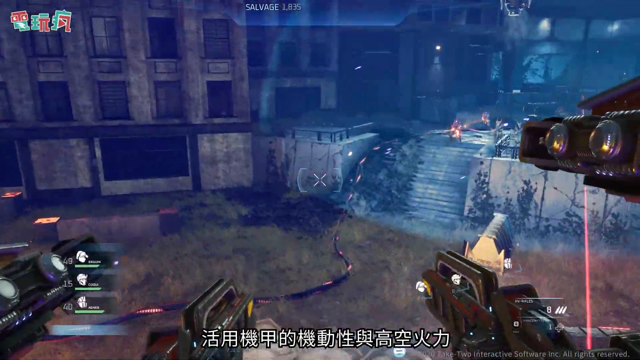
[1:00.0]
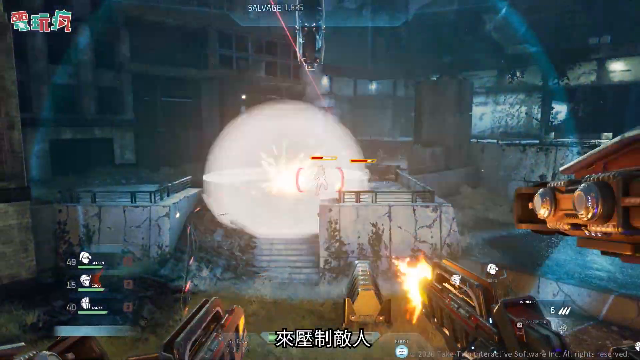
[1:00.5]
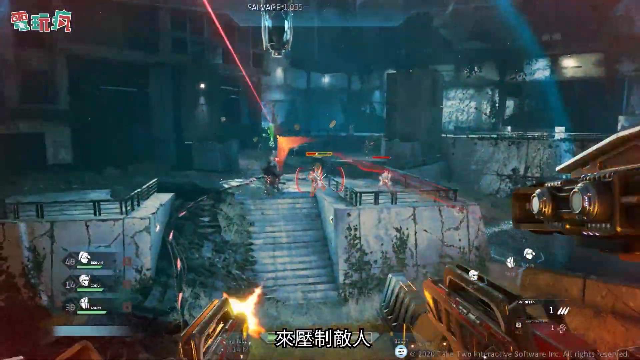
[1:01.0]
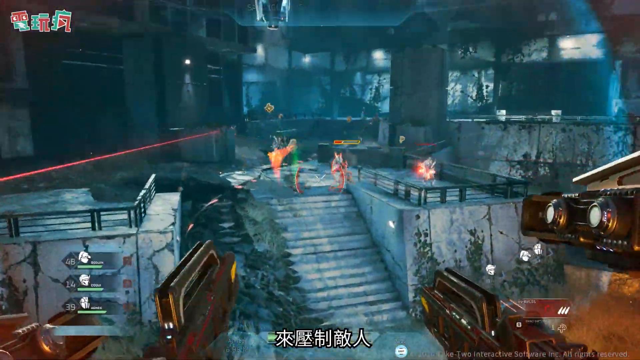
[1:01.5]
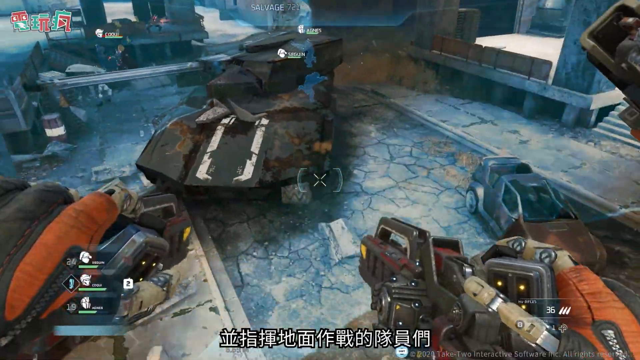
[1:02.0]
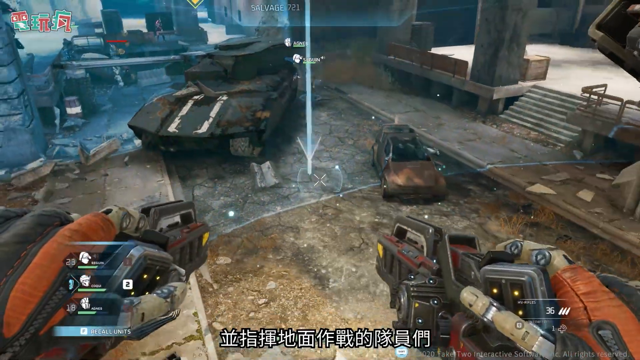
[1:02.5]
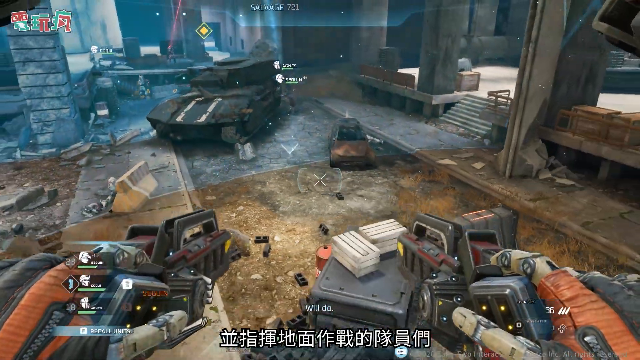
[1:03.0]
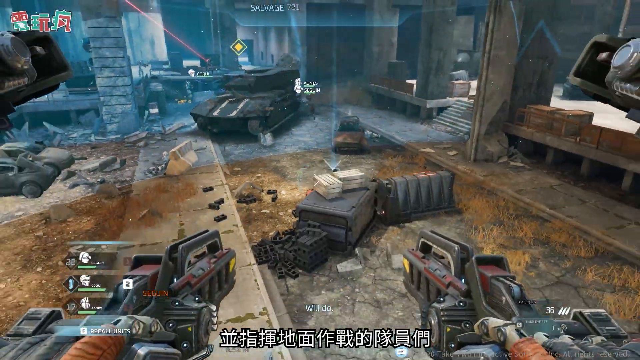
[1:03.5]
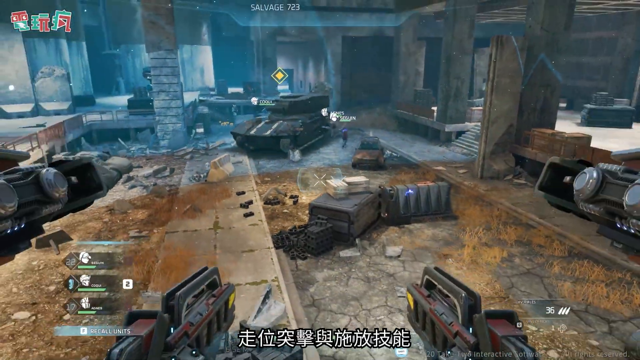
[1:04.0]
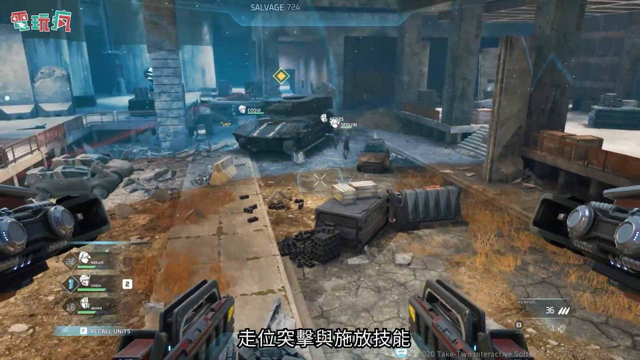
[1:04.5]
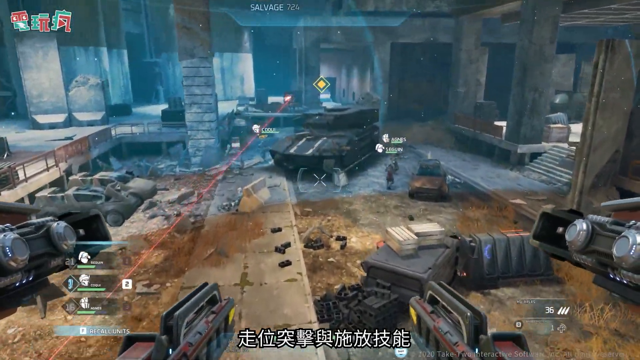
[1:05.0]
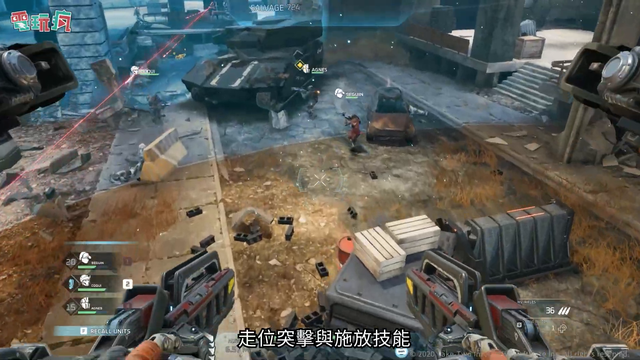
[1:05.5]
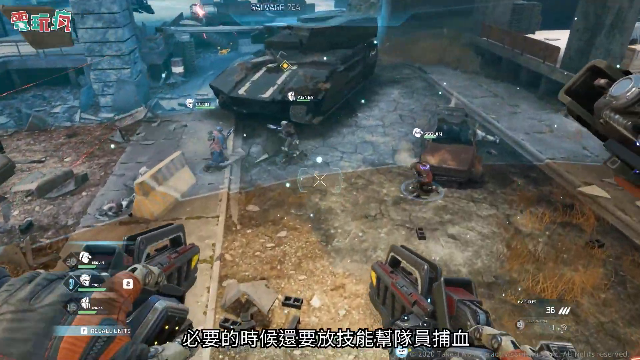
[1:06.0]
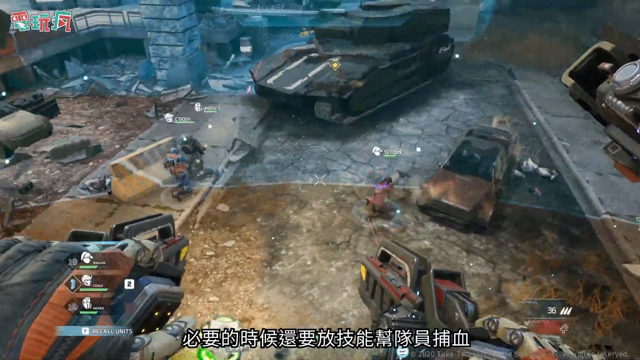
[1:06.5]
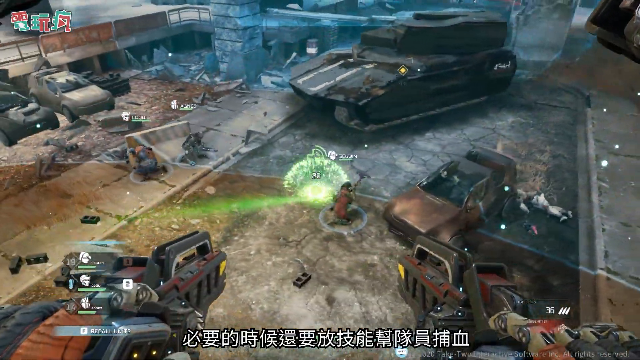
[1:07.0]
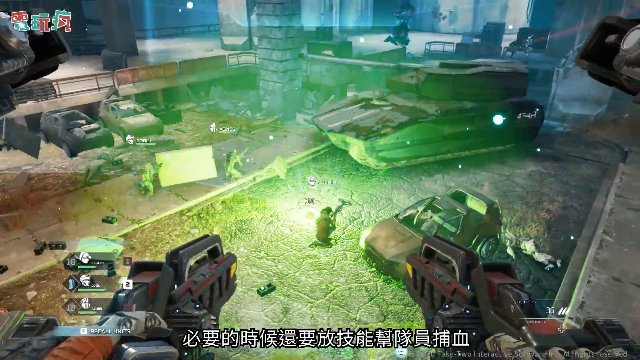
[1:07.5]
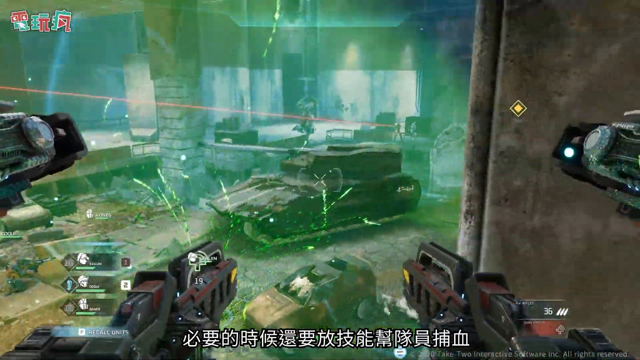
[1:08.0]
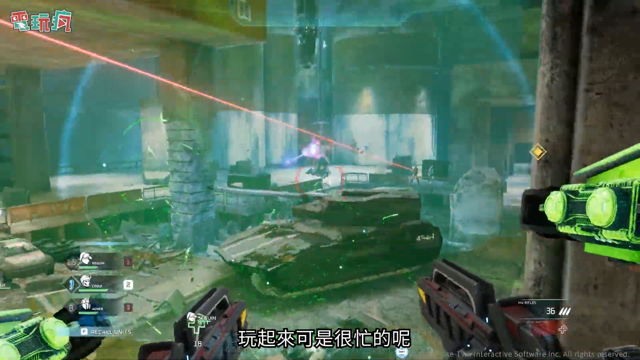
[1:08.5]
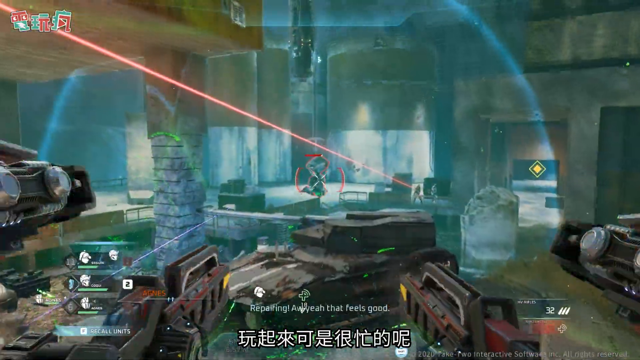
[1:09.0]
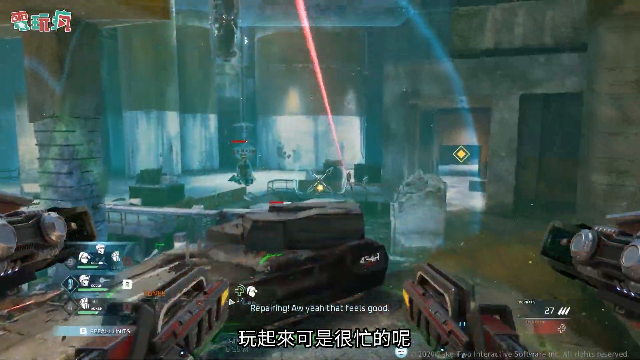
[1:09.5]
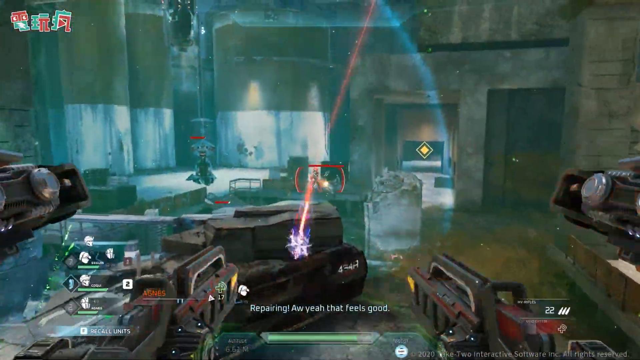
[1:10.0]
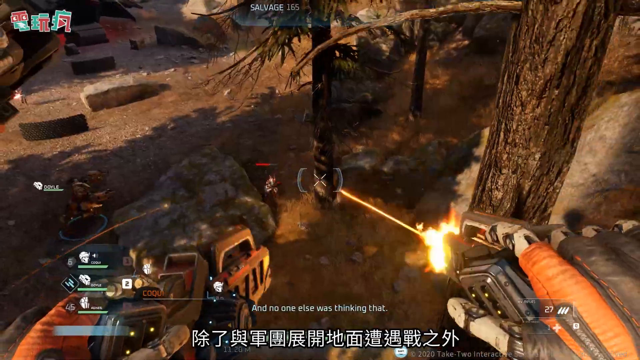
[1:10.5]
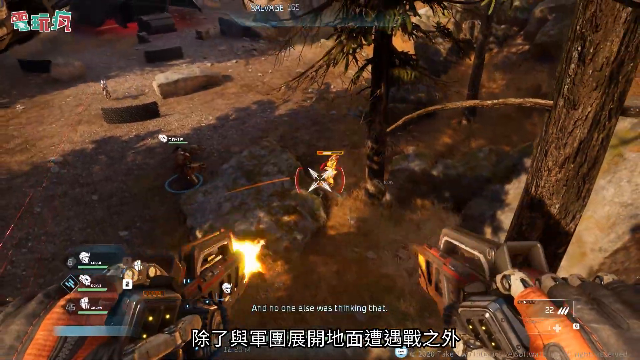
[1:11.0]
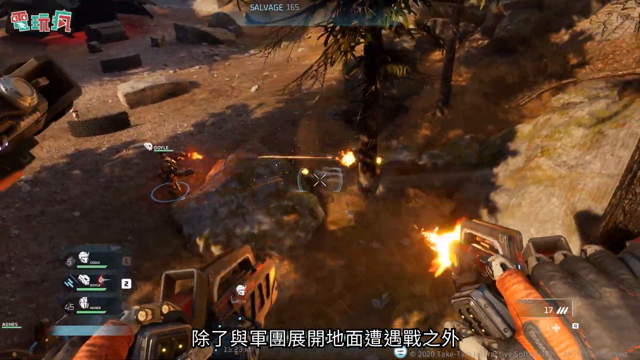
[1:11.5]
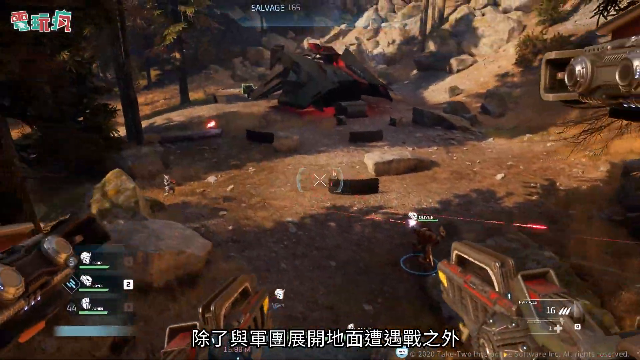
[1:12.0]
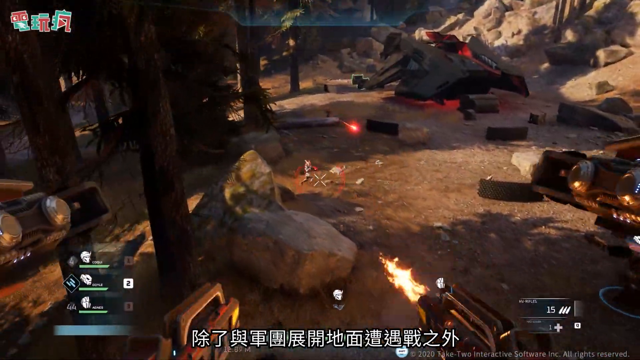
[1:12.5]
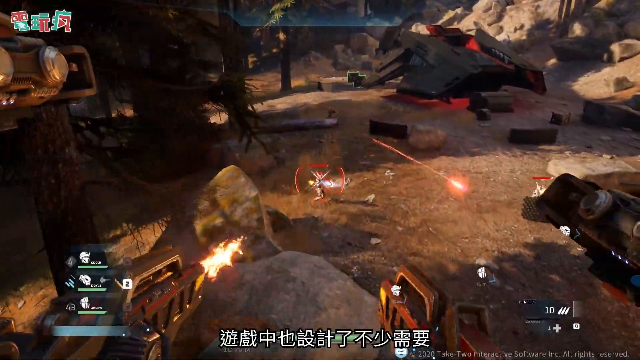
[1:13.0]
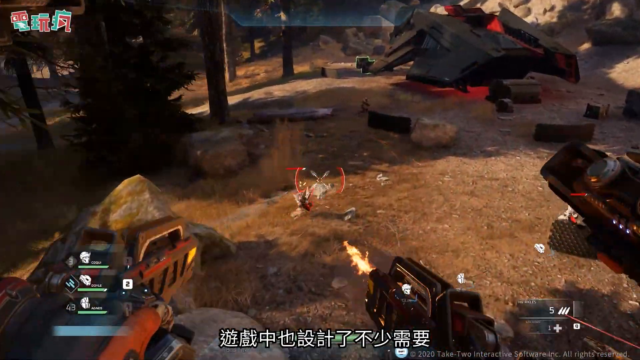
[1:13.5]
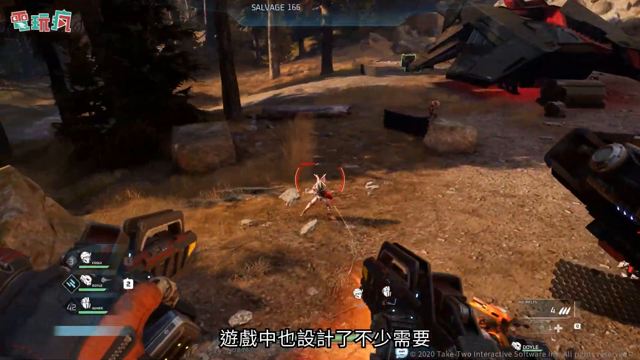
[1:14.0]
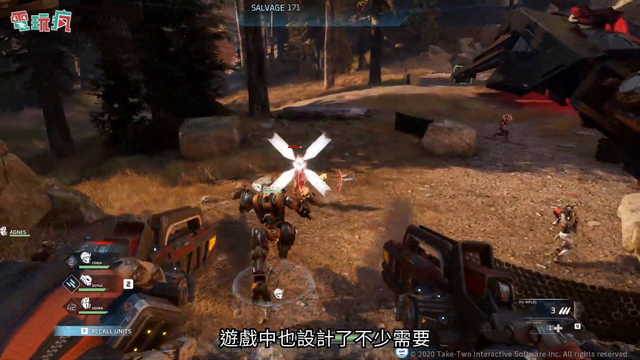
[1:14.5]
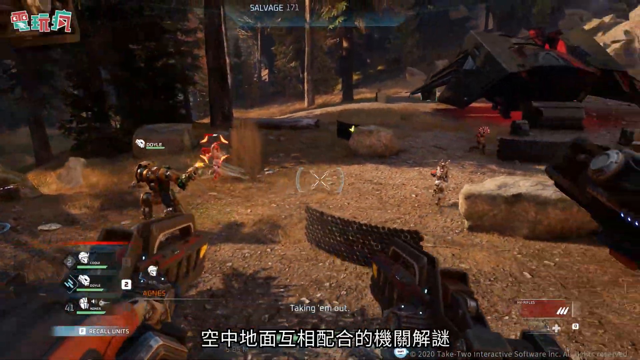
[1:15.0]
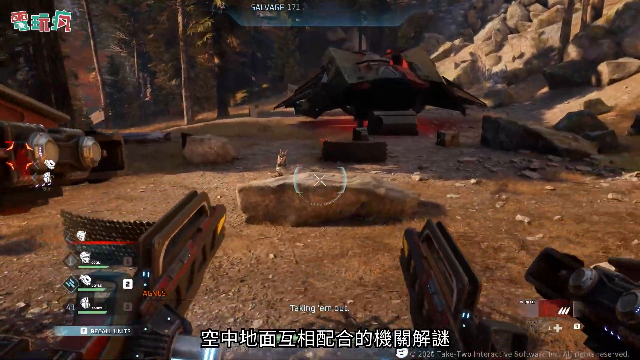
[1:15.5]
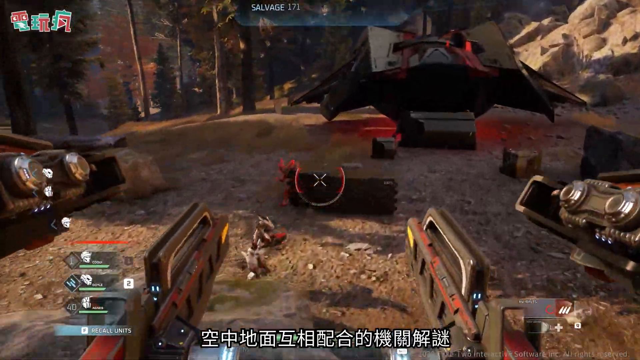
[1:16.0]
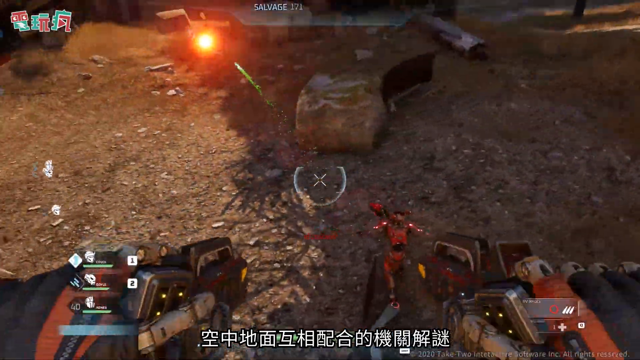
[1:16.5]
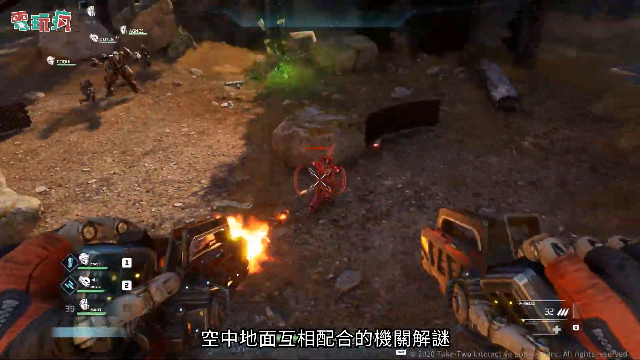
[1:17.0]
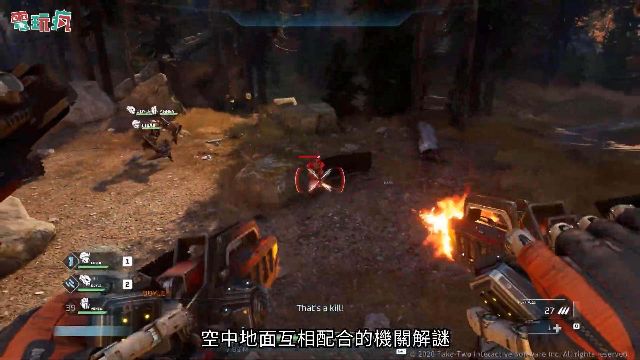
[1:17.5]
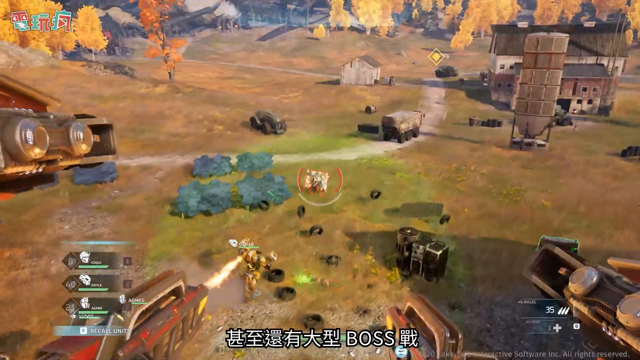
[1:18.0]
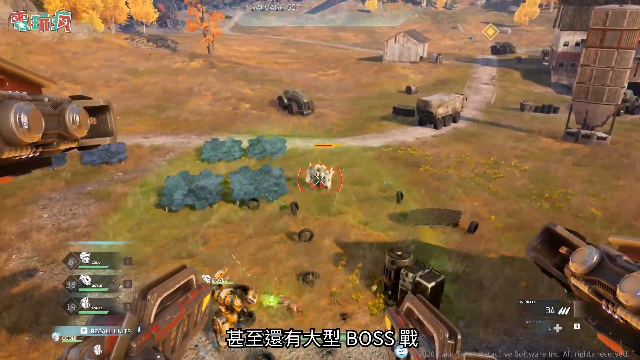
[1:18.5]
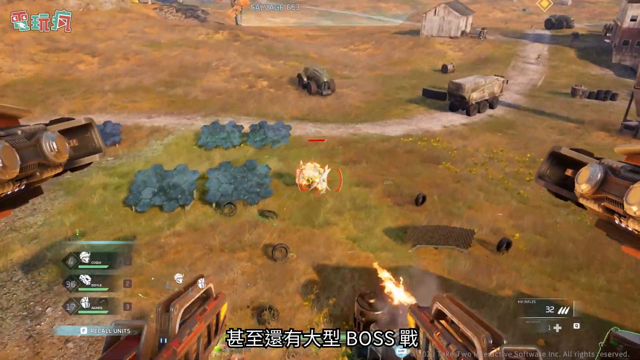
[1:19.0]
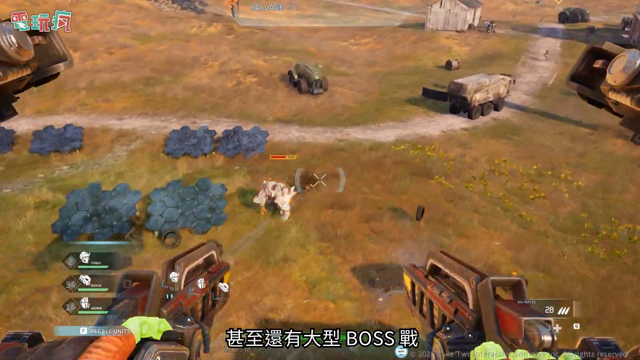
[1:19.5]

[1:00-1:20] Several shots and explosions happen on a small pedestal with some stairs, and then everything kind of backs up. What look like broken-down buildings are covered in all kinds of pieces of junk, some of which look like vehicles while others are just random parts. There appears to be a tank in the background. The scene switches to another outdoor area of the game, where the ground is quite brown and barren, with some trees and boulders. In addition to the many very small characters, there is one that looks like a larger kind of robot, and a close-up of them suggests that the earlier robot character is one of these characters being fought. The scene changes again to a more pastoral setting that looks like a farm, with what looks like a barn in the background. It is fairly clear, with some autumnal trees in the background. The gun appears to be pointed down at the ground toward the target, as if the player is shooting from a higher vantage point.